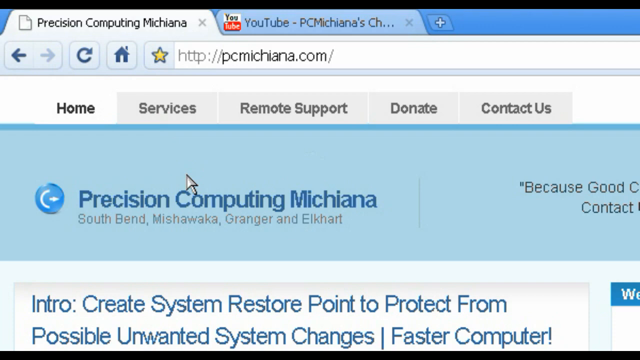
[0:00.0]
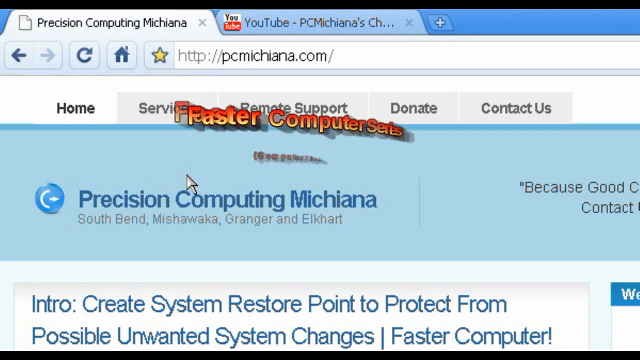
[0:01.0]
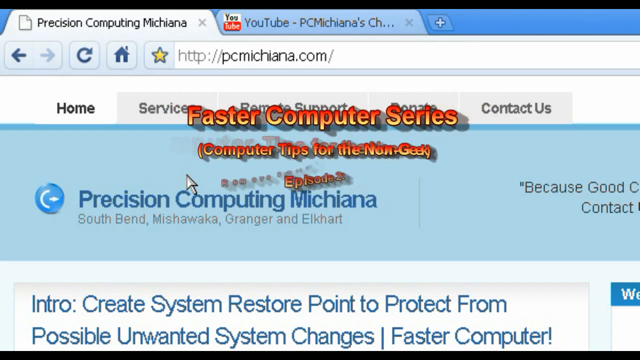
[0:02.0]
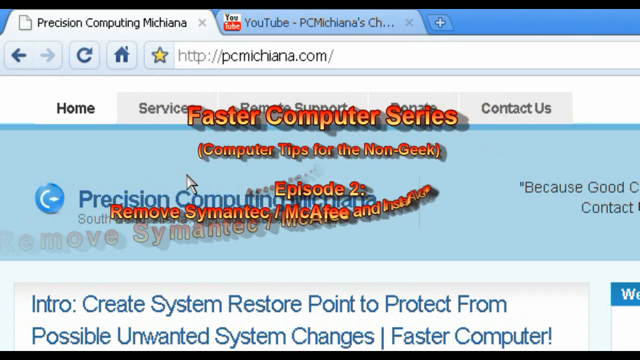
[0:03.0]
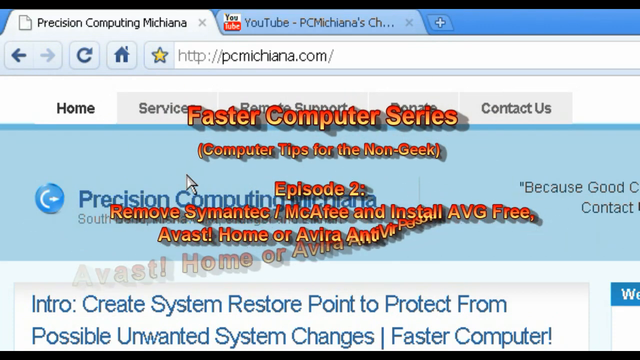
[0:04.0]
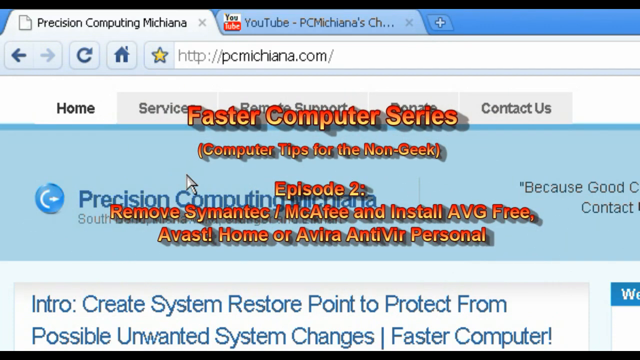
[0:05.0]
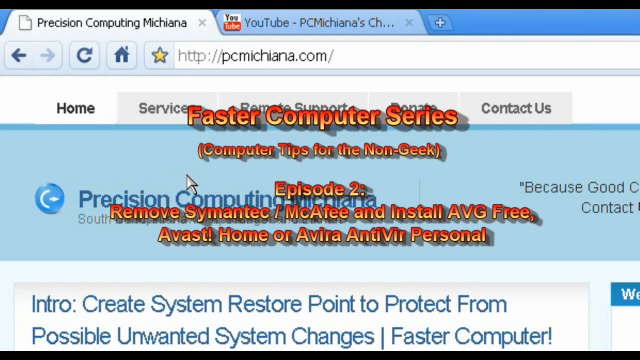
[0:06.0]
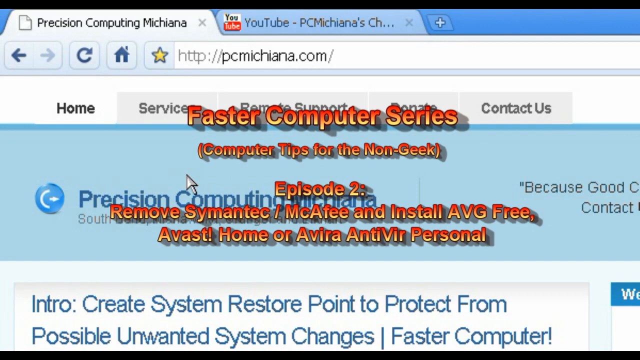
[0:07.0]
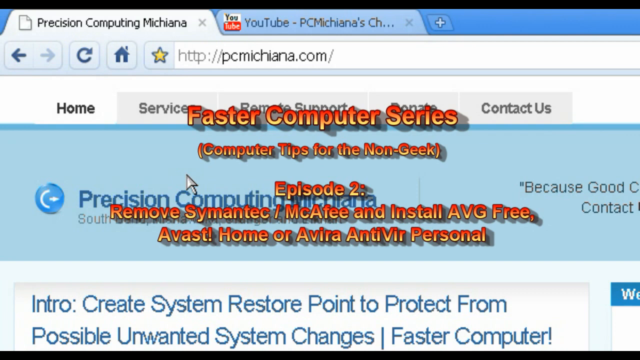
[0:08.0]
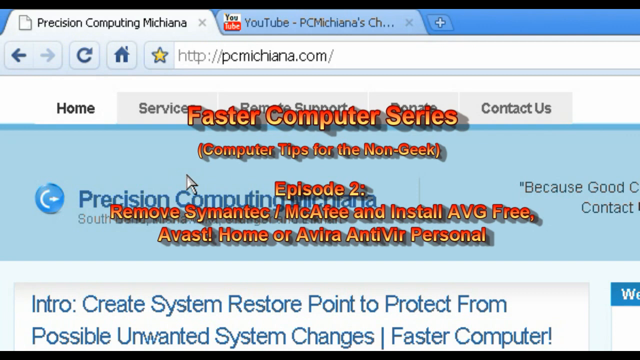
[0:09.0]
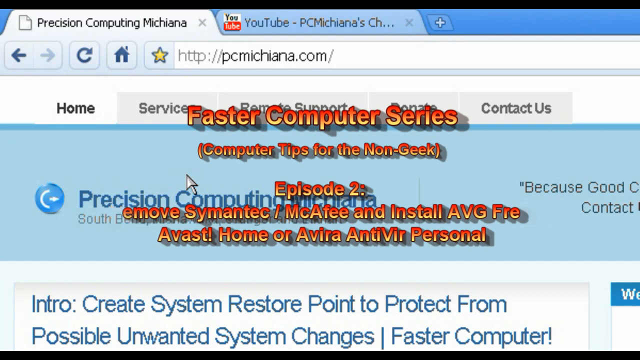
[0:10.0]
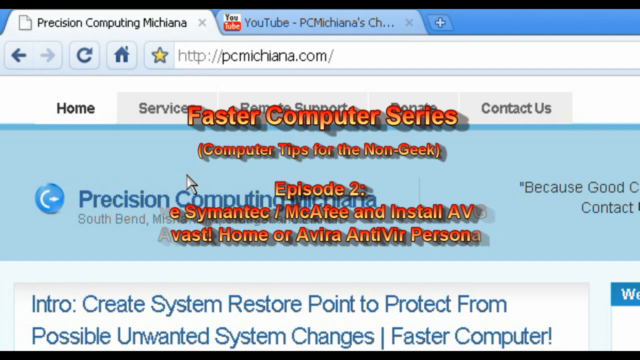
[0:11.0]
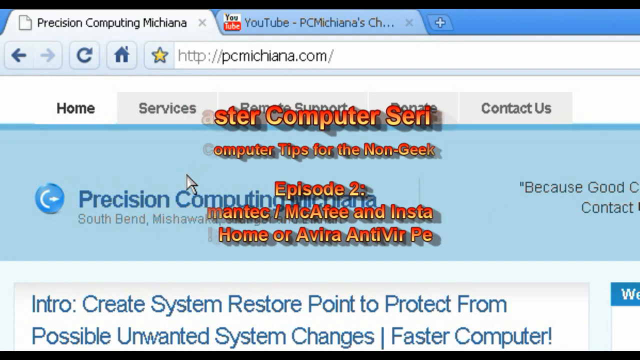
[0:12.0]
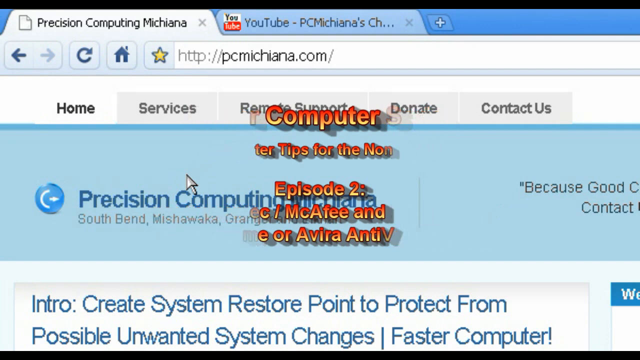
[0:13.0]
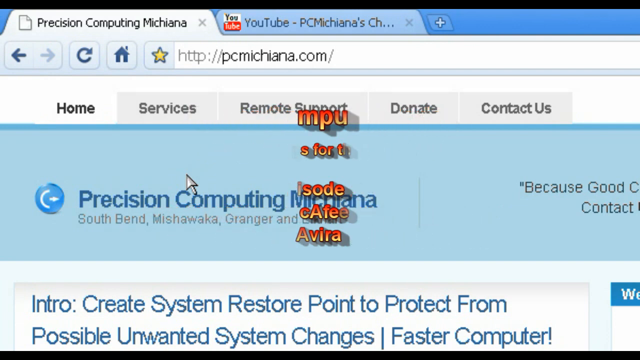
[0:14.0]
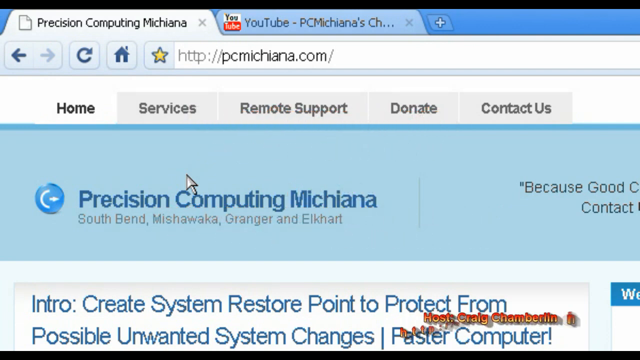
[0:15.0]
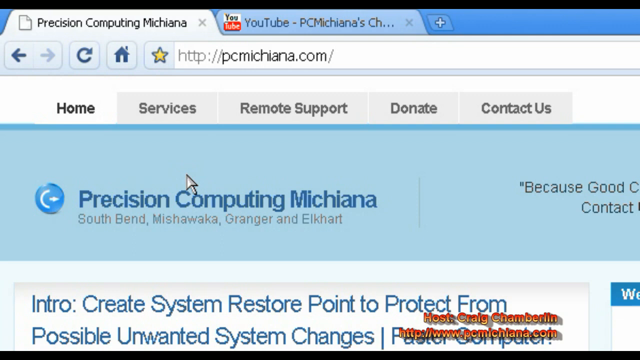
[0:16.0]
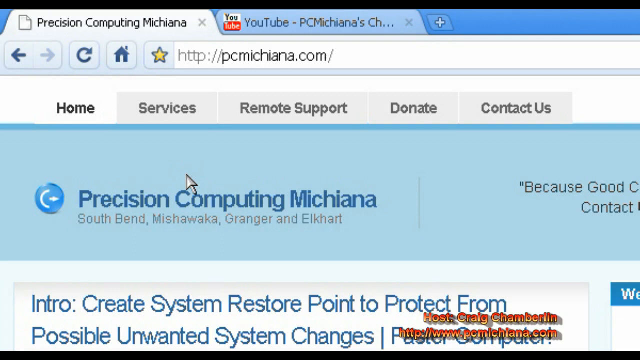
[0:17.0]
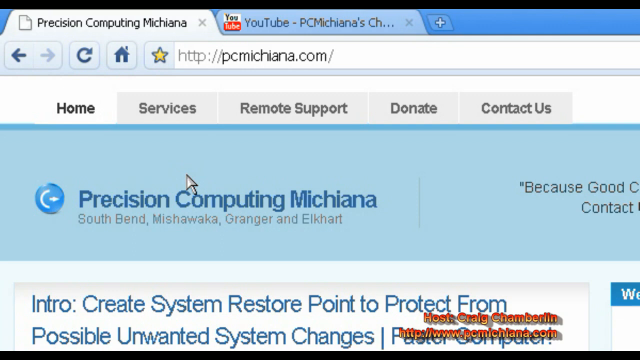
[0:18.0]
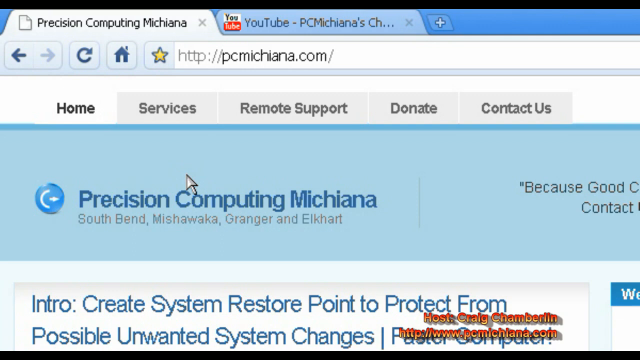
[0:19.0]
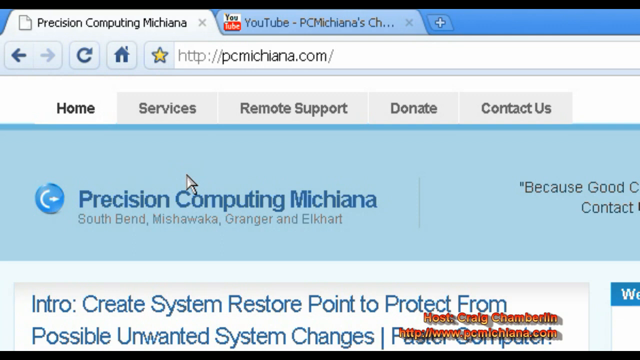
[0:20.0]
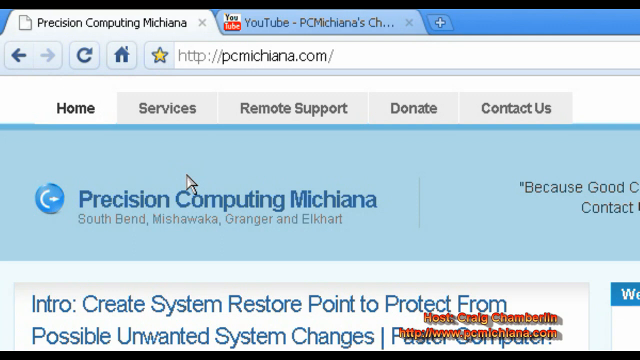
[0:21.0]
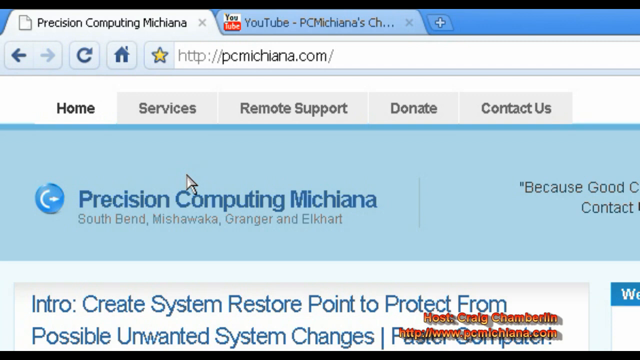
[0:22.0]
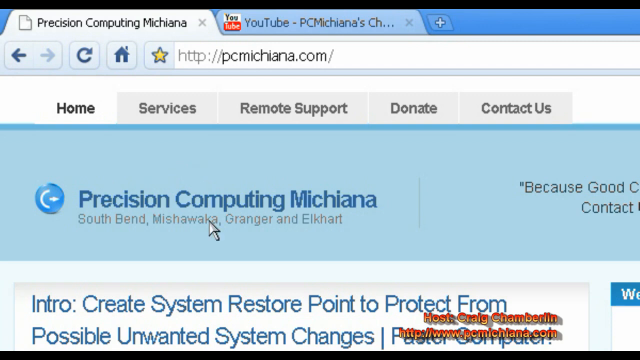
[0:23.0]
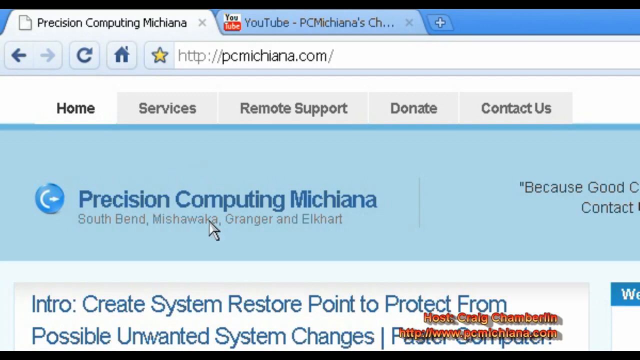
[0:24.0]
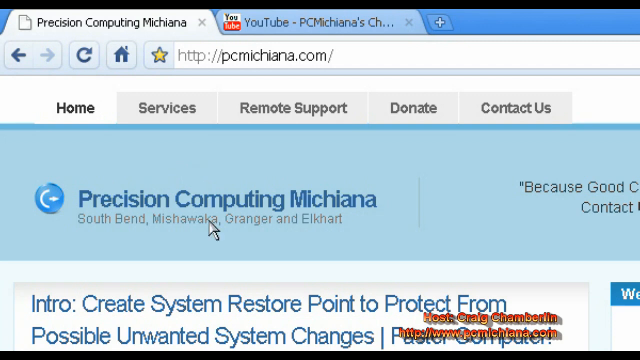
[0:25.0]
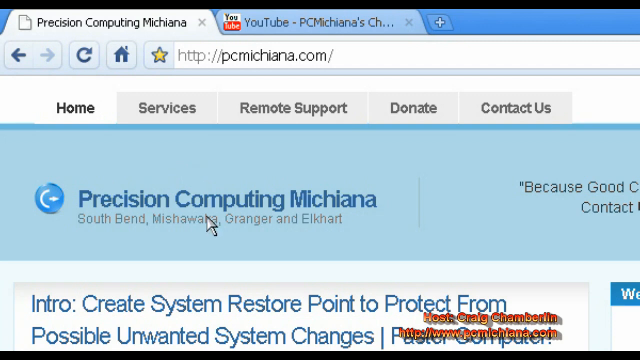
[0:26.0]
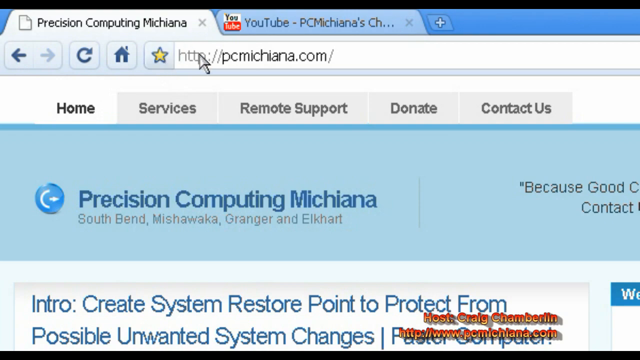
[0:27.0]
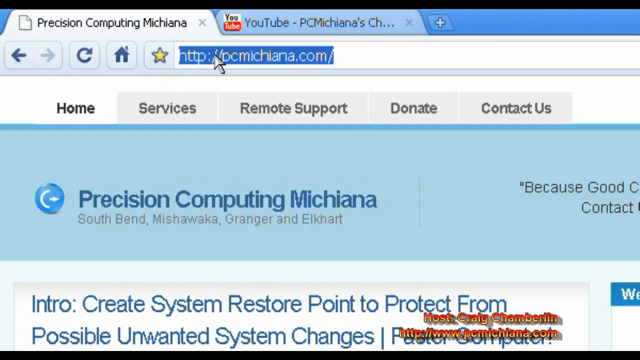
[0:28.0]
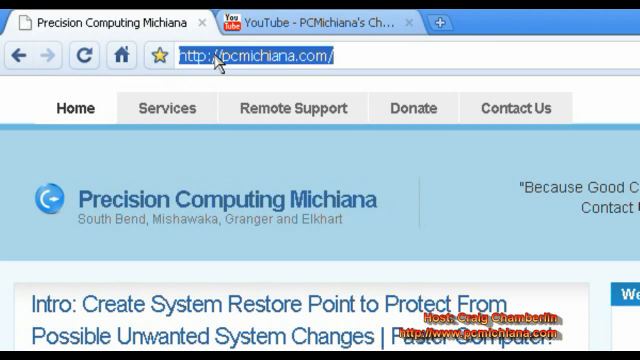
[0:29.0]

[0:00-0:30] The video has a blue-themed background and shows an open web page with two tabs at the top: one is for Precision Computing Mishiana, and the other is for YouTube, reading PCM Mishiana, with the rest cut off. PCM Mishiana seems to be the title of the web page, which is about precision computing and creating system restore points. There is a menu at the top with items such as home and service. The page is very blue-toned, themed in blue, white and green. In front of it is writing reading "computer tips for the non-geek" and "Episode two, remove Symantec and McAfee and install", in a red and yellow ombre, with a sort of PowerPoint-like effect that fades the writing in and out. Toward the end, more text appears with information about who the host is, and then the website, PCM Mishiana, is given again. The cursor highlights the website, the page scrolls down a little and comes to a stop. The writing disappears, and the full title of the web page becomes visible: Precision Computing Mishiana, South Bend, Mishawaka, Granger and Elkhart. There is some writing including "because", "good" and "contact", with the rest not visible, and a logo made of a bracket and a dash in a blue circle.